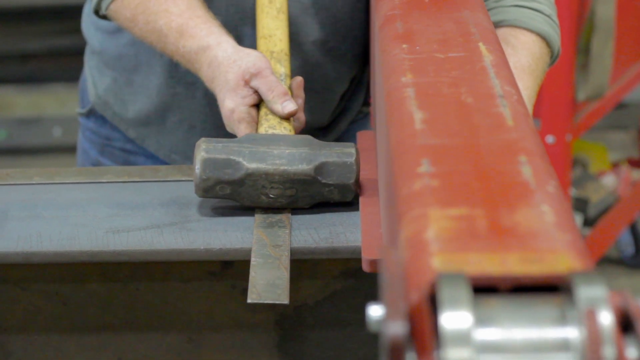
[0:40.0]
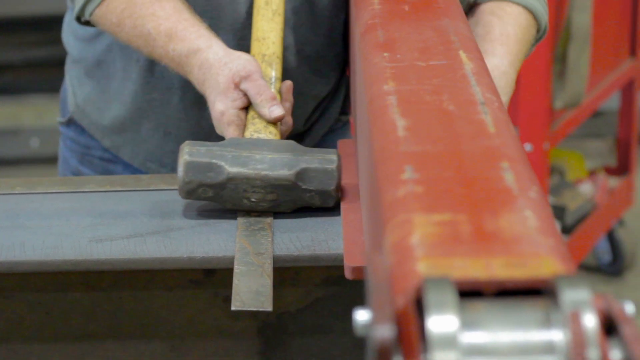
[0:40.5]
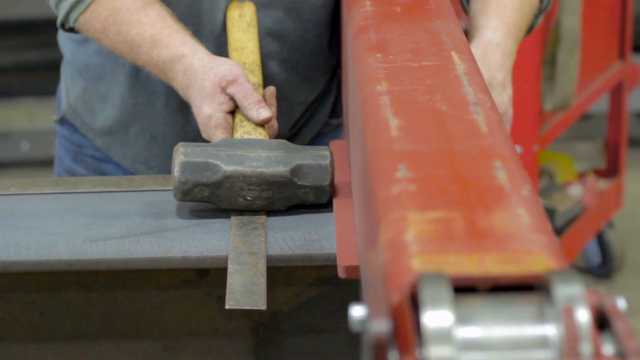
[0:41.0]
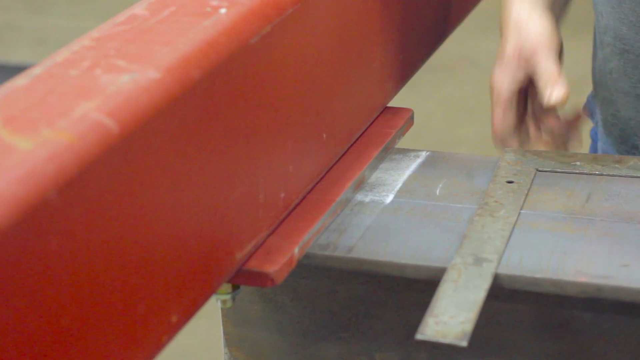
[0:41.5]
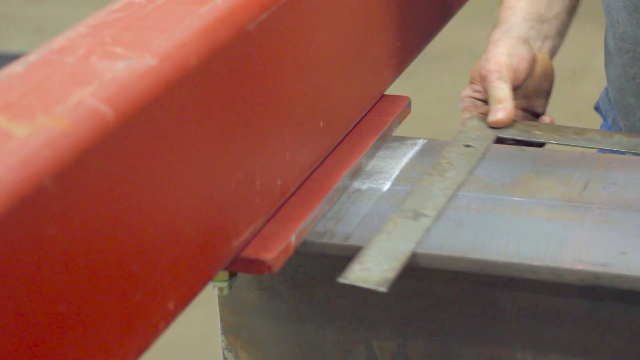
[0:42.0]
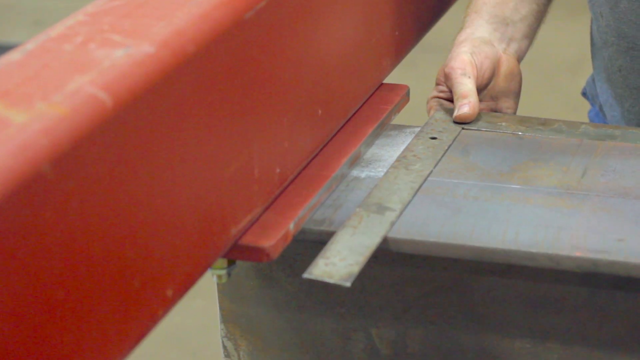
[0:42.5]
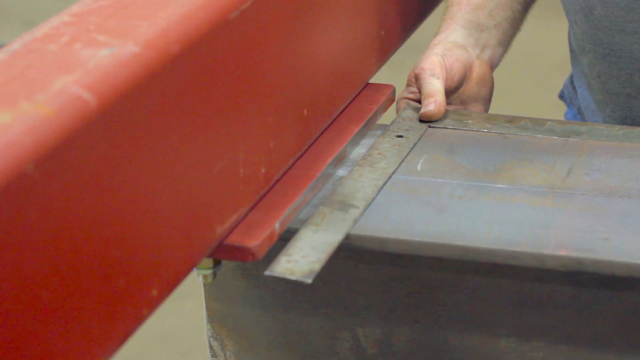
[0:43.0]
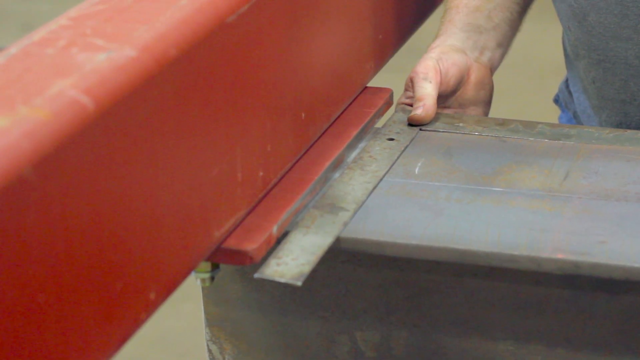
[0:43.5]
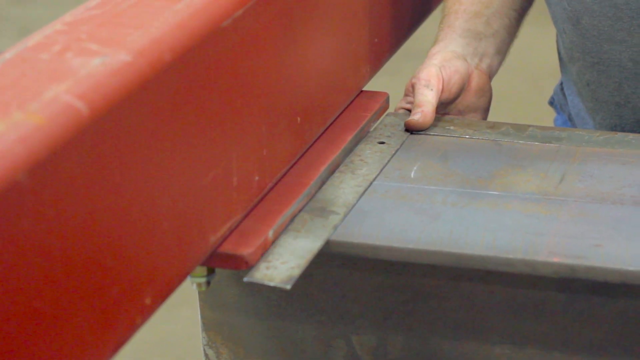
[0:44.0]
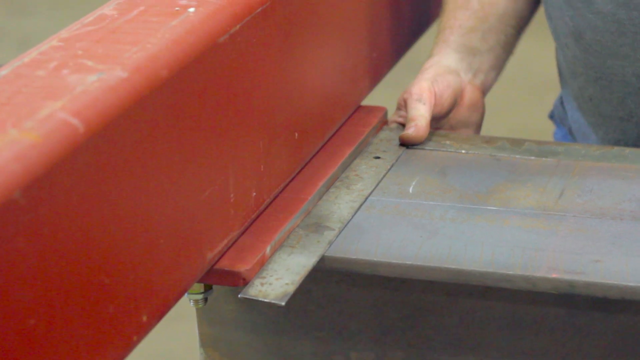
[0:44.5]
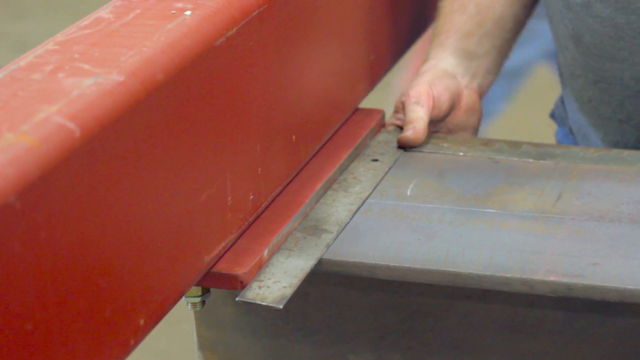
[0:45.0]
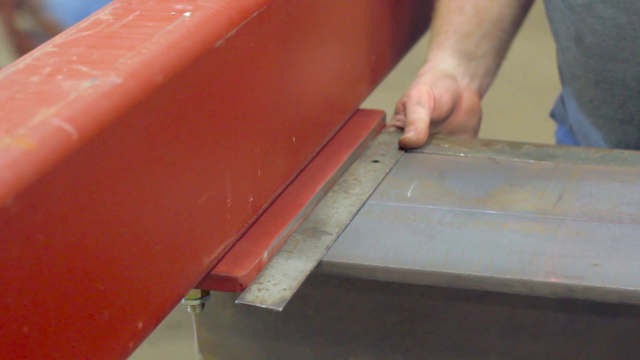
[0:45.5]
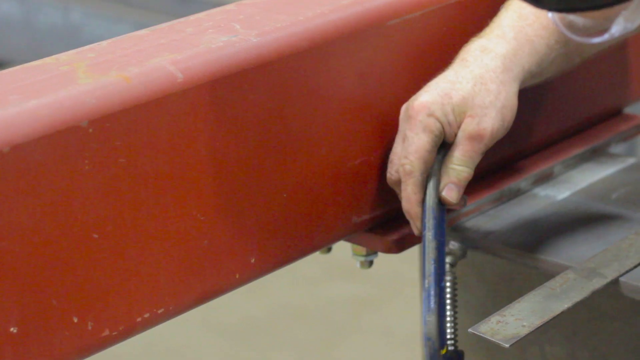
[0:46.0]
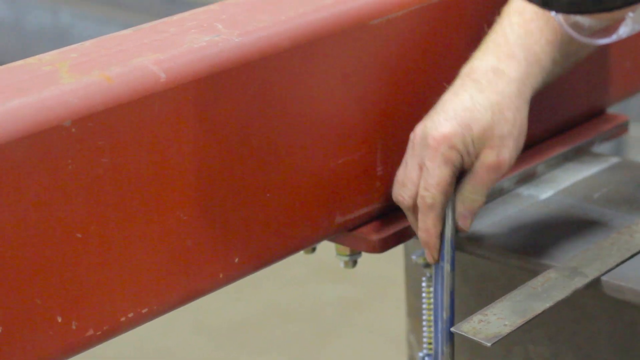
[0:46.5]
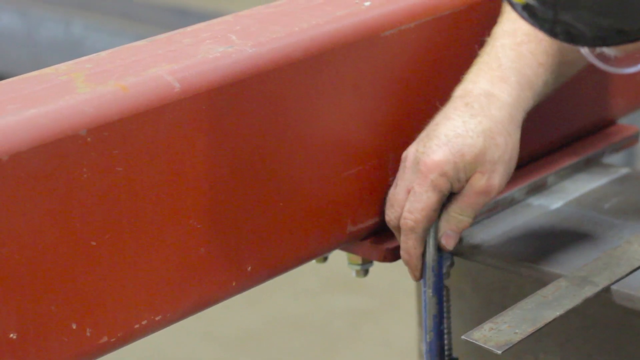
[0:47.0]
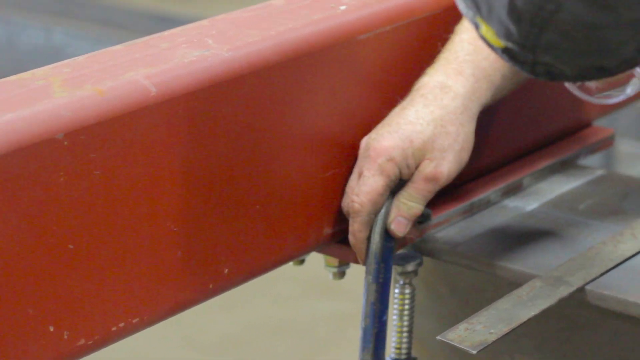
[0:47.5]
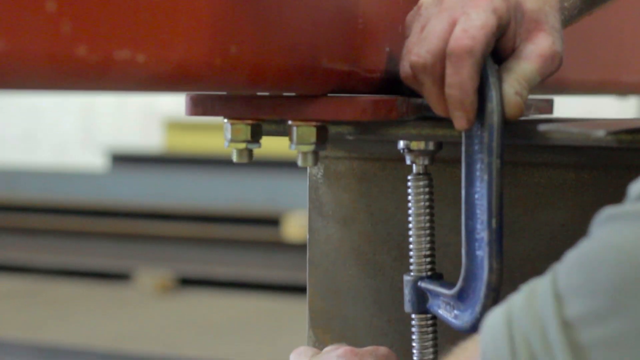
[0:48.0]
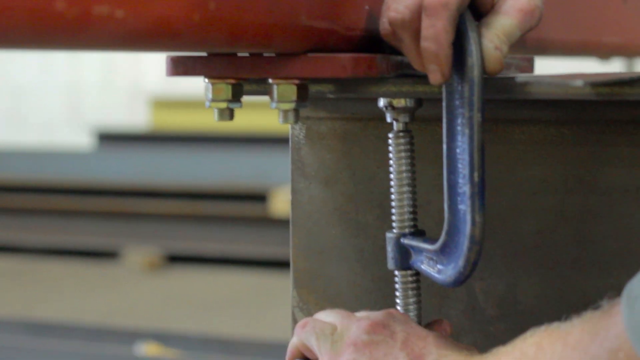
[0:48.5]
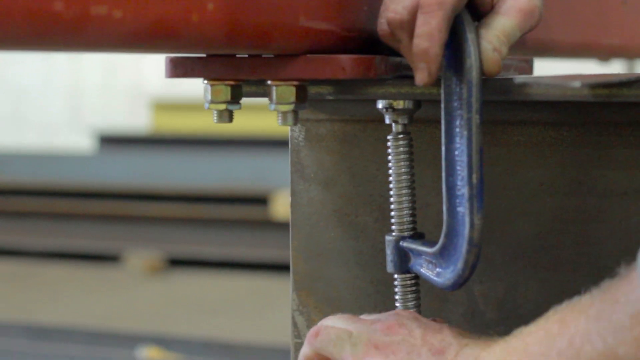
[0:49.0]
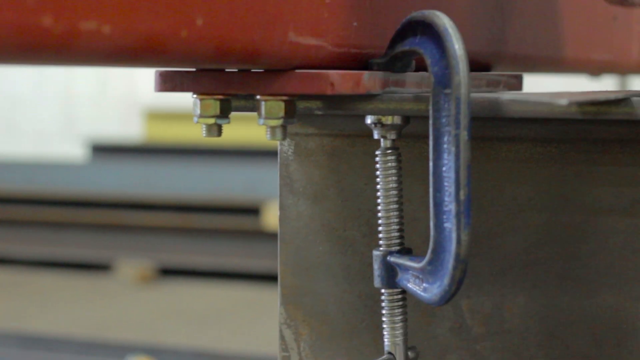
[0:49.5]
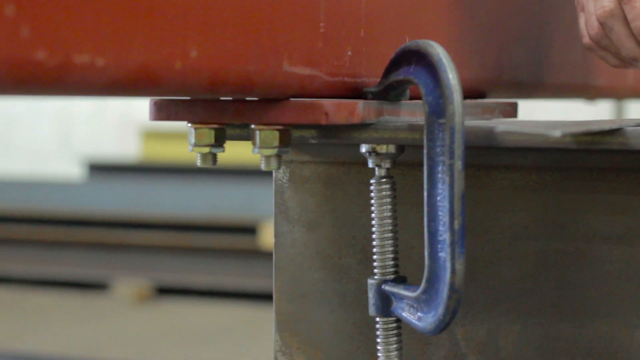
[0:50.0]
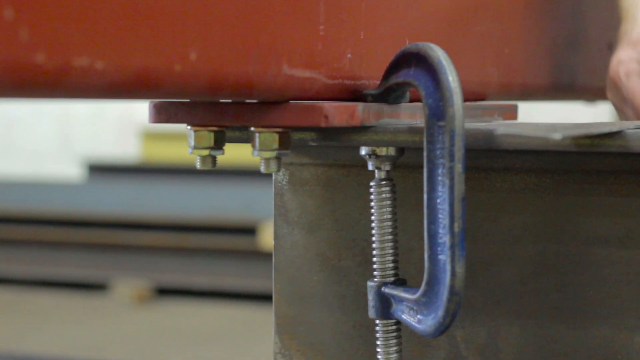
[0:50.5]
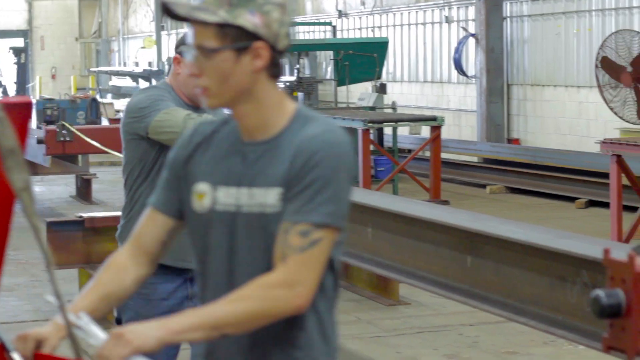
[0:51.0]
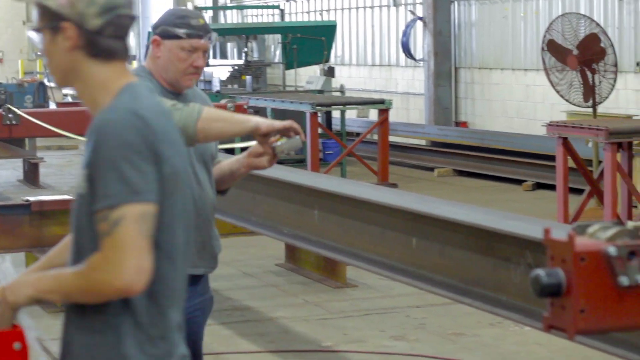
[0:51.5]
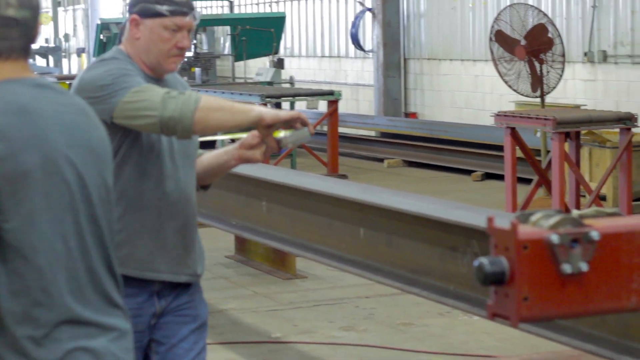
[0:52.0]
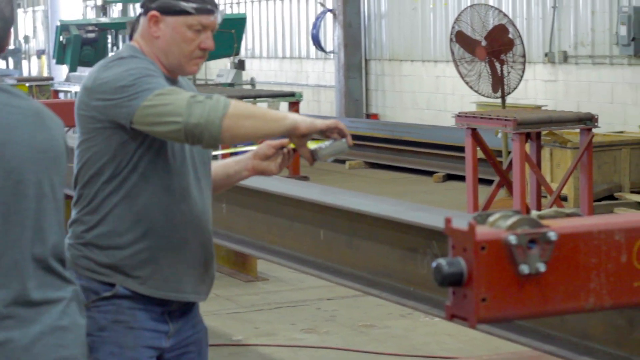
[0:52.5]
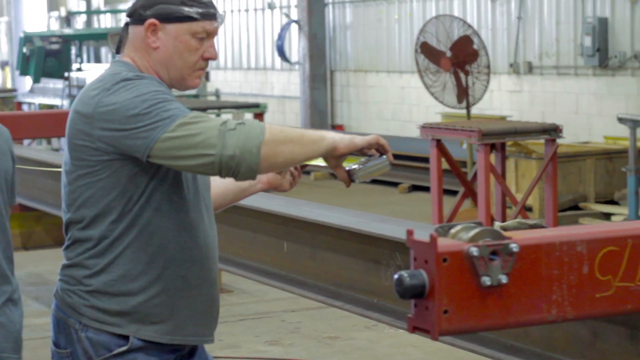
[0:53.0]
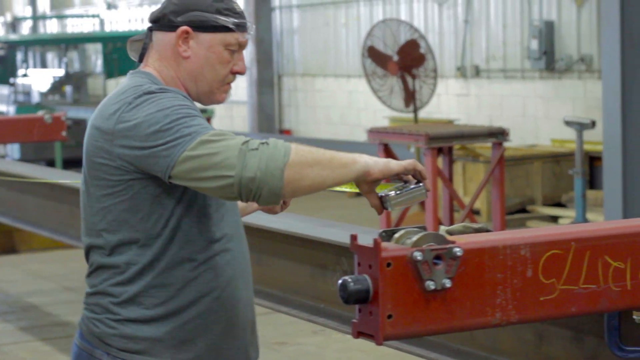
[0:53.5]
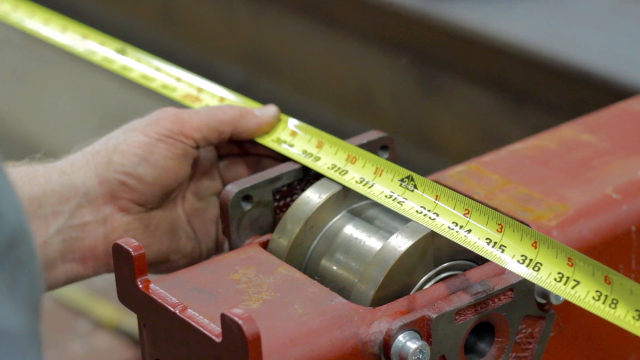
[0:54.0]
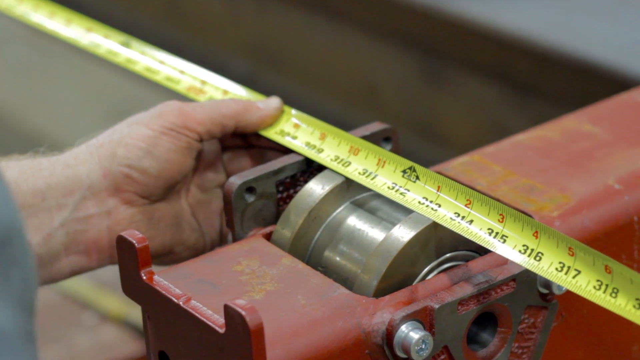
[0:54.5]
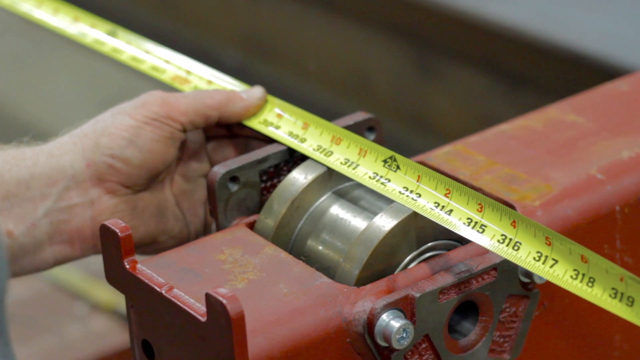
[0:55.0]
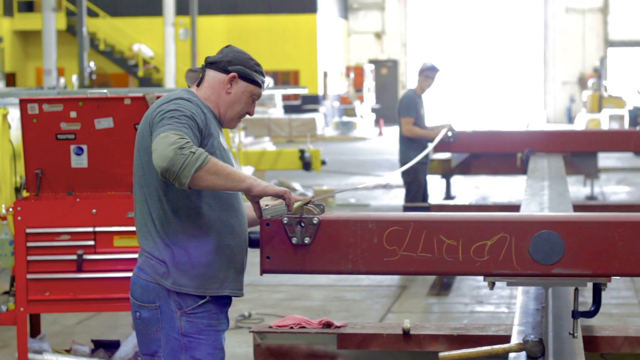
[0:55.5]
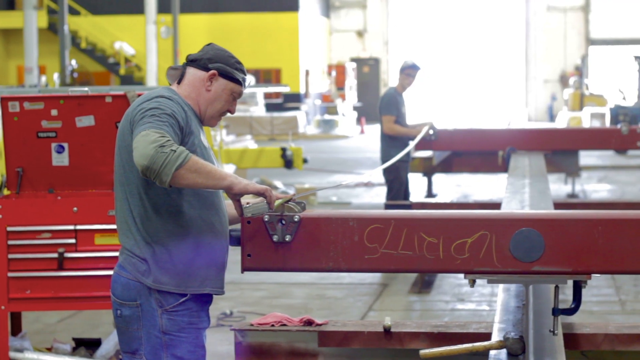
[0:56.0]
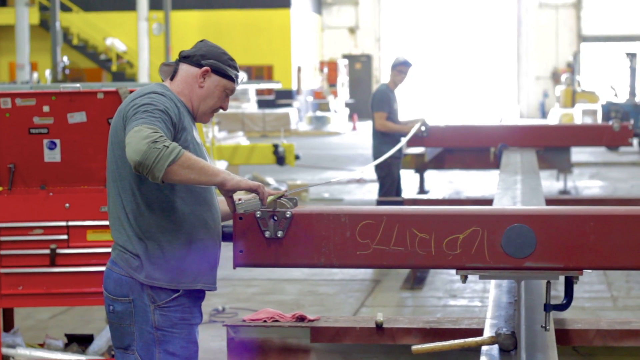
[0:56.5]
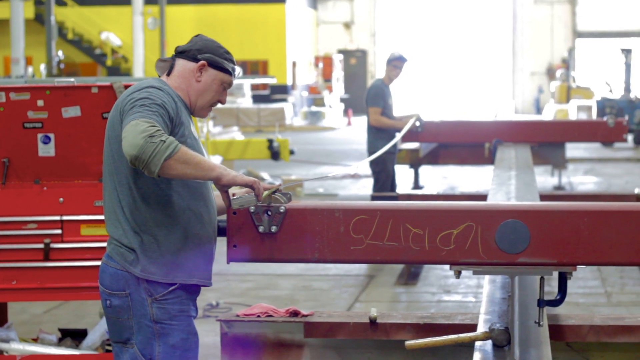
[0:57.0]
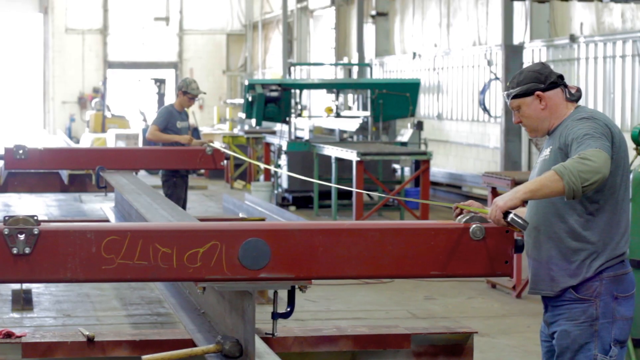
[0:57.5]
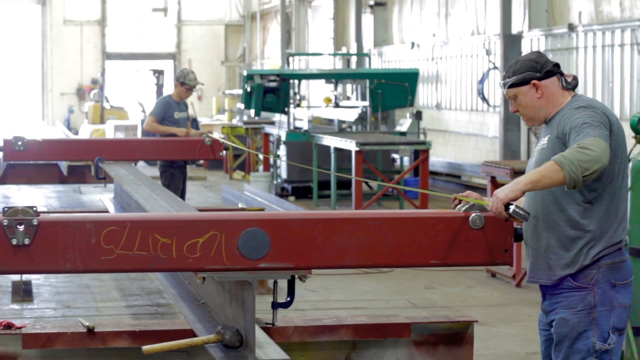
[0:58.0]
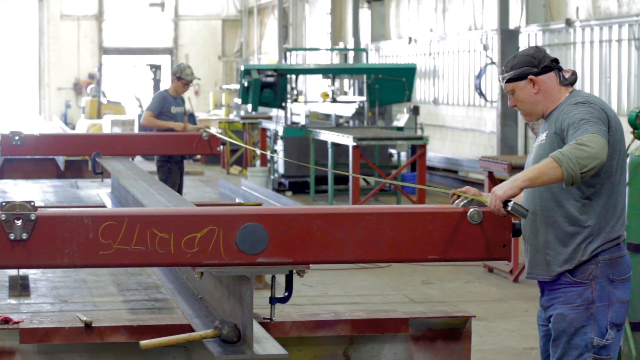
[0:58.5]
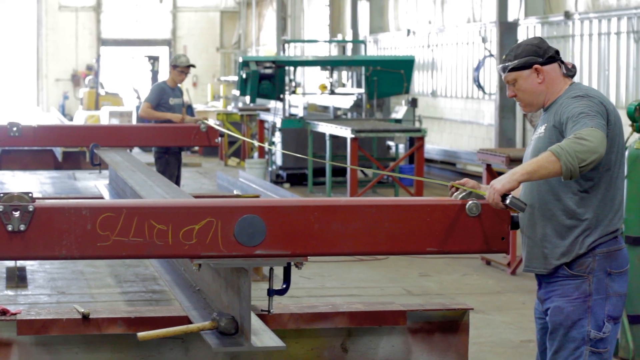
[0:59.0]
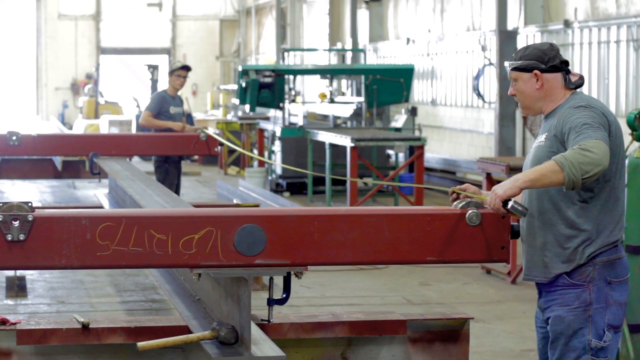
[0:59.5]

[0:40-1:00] The older man taps the large red bar lightly with his sledgehammer. The camera then films the large red bar on the gray platform as the older man uses an L-shaped ruler next to it. He uses a C-shaped wrench to secure one of the bolts connecting the large red bar to the gray platform. He walks with a large tape measure to measure a long gray bar, and uses the tape measure to measure the long red bar. The camera zooms into his hands and the yellow tape measure. The older man and the younger man with glasses and a camouflaged cap are then seen at opposite ends, measuring the distance between the two red bars placed on the grey platform.